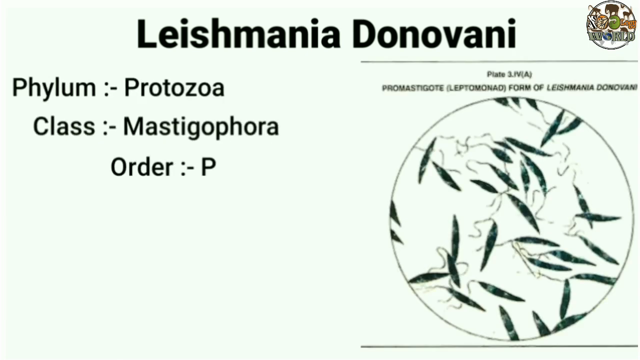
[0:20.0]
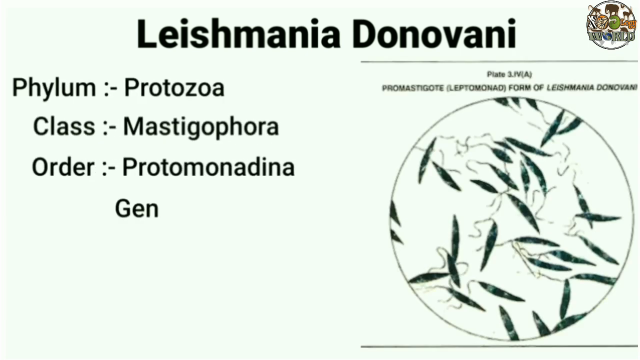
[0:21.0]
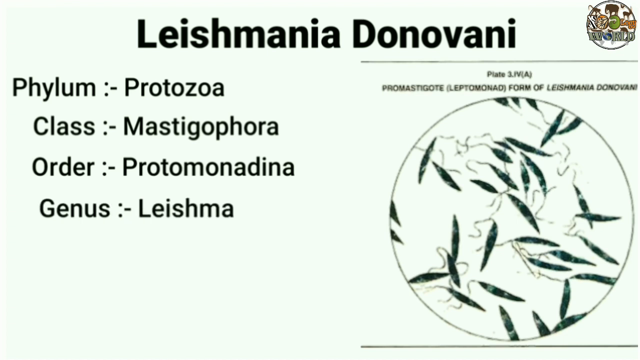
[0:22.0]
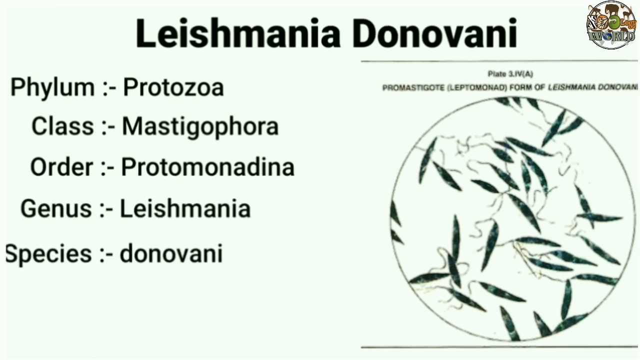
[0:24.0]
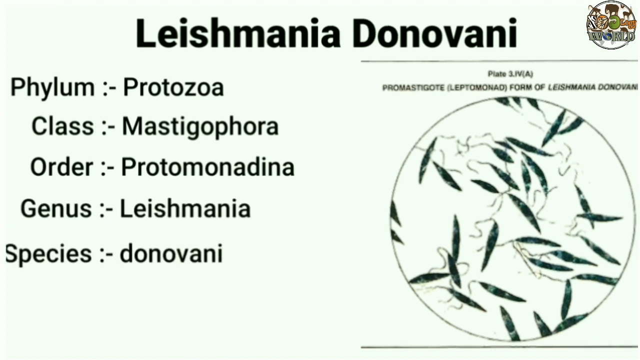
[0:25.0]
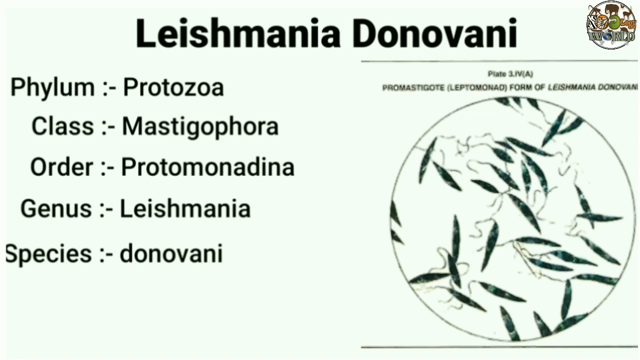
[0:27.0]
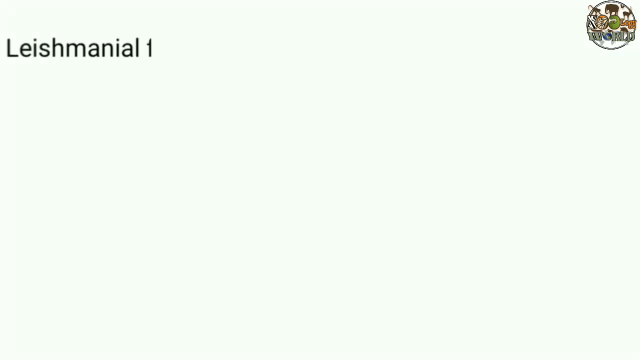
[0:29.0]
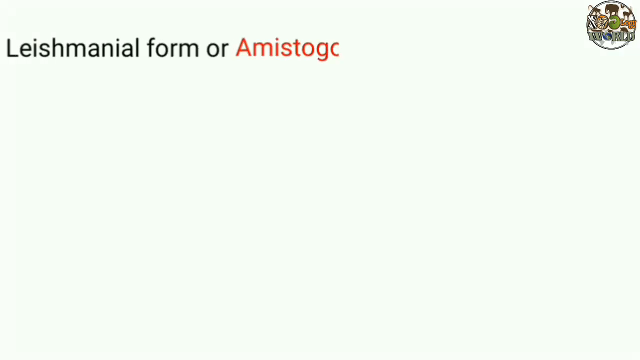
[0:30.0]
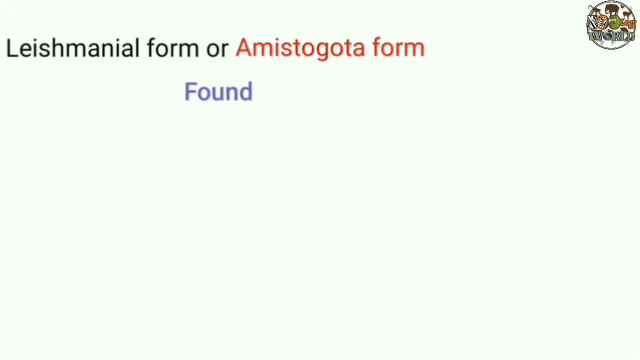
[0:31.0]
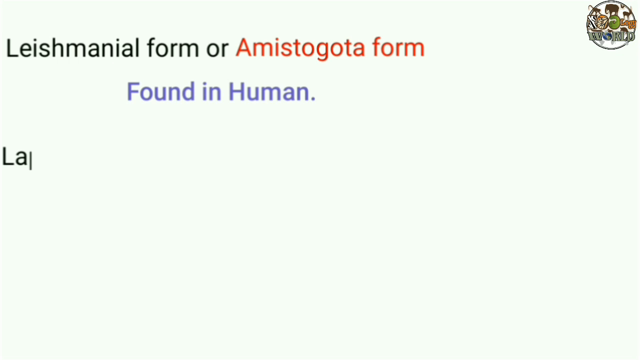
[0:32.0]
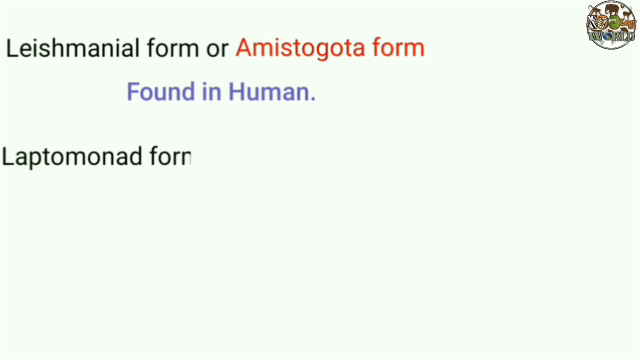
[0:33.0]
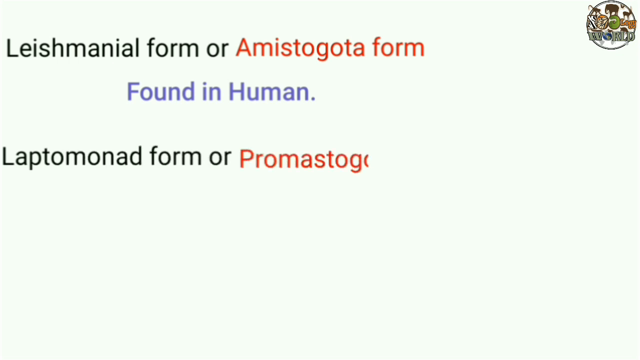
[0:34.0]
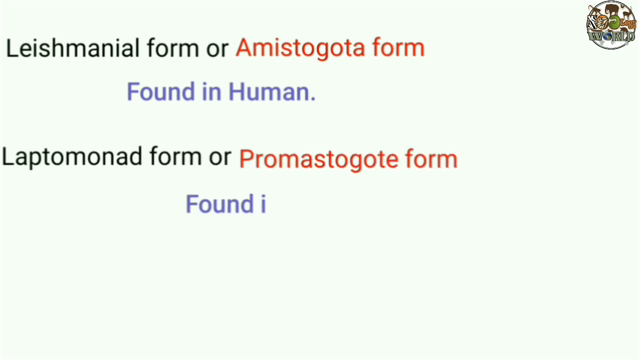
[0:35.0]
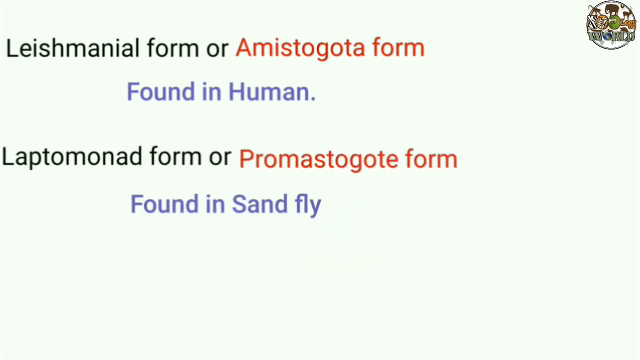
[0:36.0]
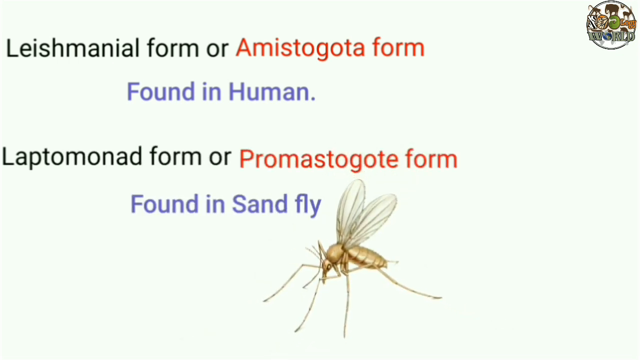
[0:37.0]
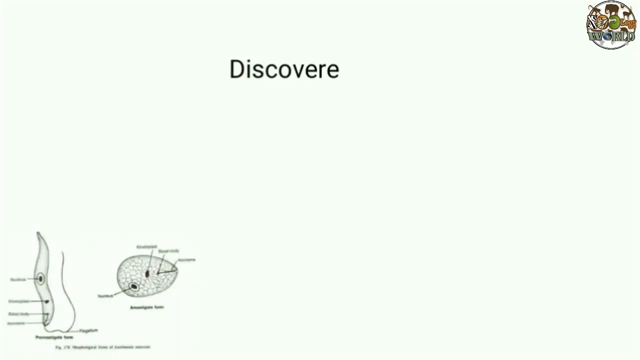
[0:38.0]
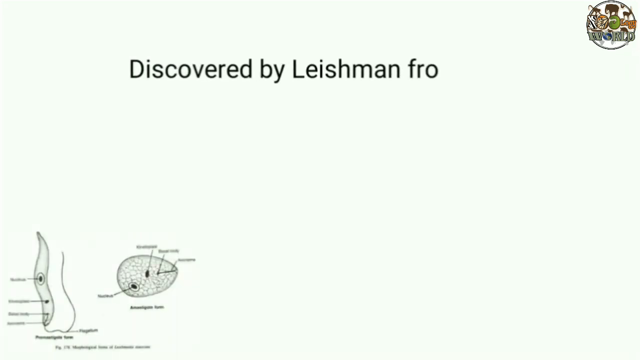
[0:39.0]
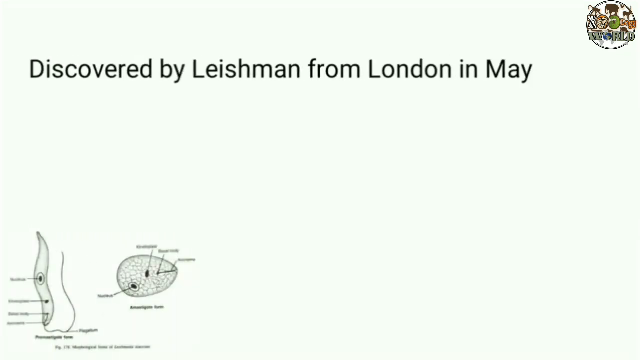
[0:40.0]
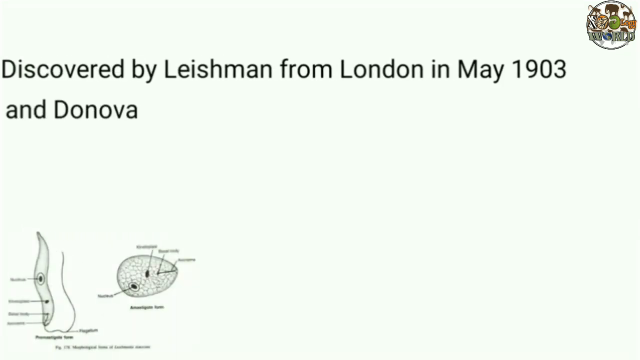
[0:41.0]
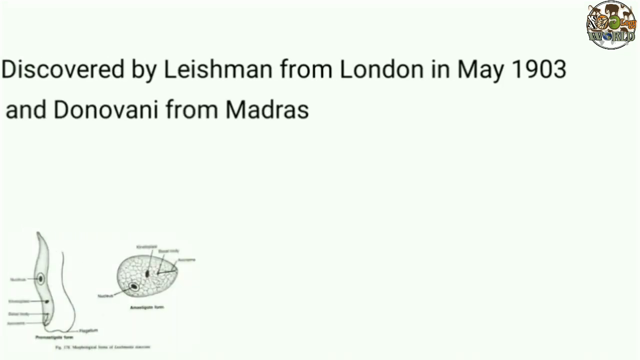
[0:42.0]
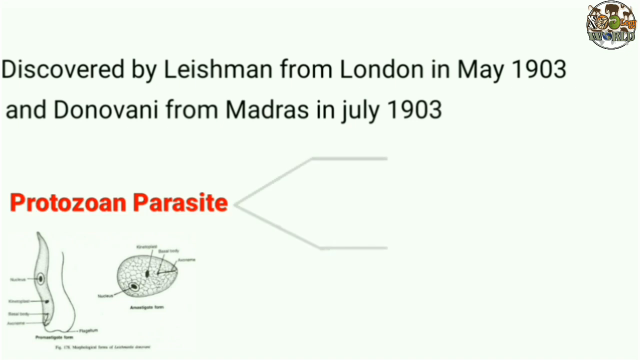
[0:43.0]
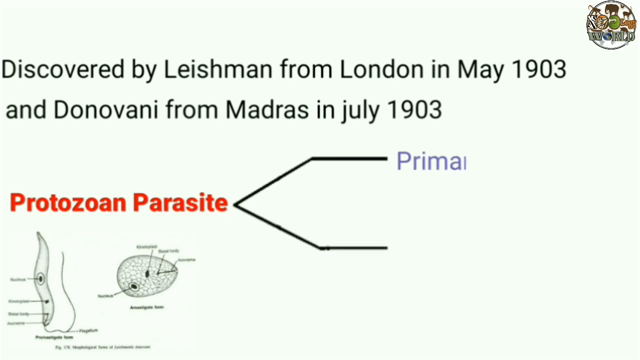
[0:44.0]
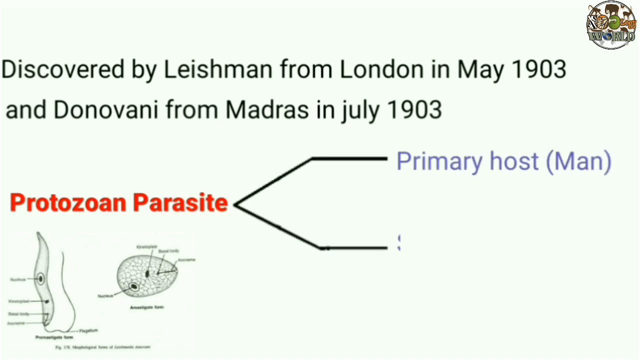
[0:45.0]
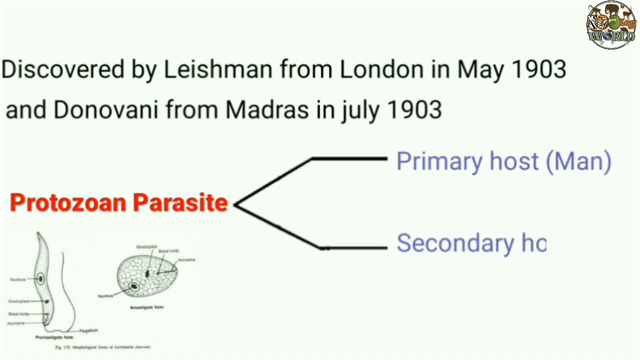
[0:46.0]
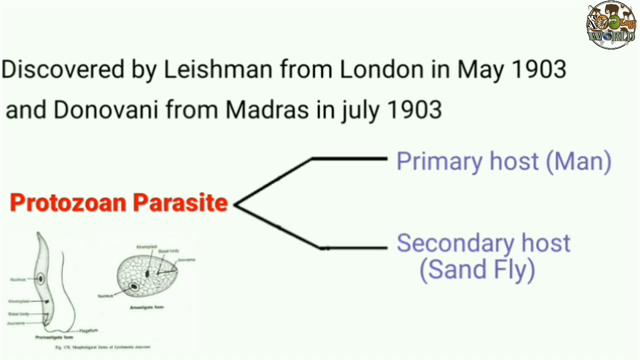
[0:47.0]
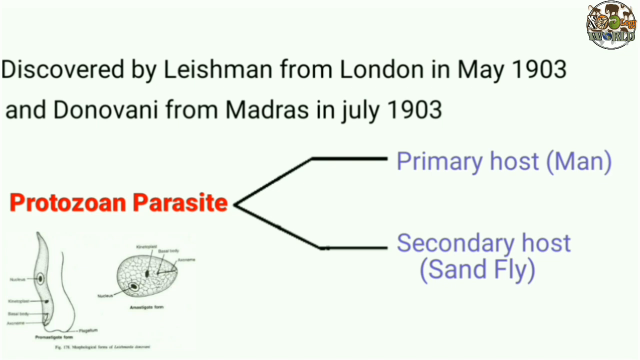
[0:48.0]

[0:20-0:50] On a white background, a logo is in the top right and the name "Leishmania Donovani" is at the top. In the bottom right, inside a circle, is a picture of the protozoa. The screen classifies the protozoa, going from phylum down to class, then order, then genus, and then species. A new scene follows, still on the white background, giving information on this protozoa, such as its being found in humans and another form that can be found in sand flies. In a new scene, a drawn picture of the protozoa appears in the bottom left. The scene describes when the protozoa was found: both were found in the year 1903. It lists the primary host as human and the secondary host as a sand fly.